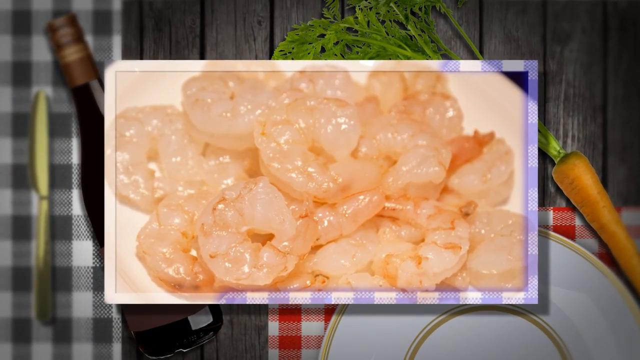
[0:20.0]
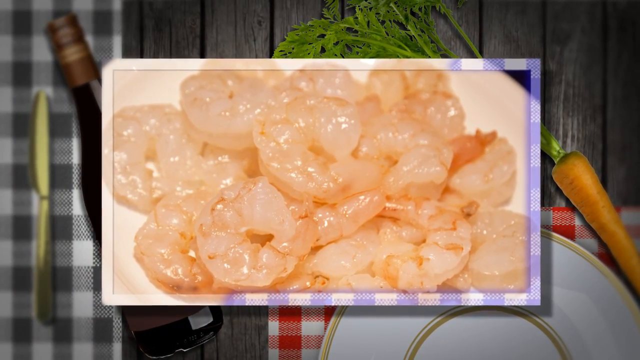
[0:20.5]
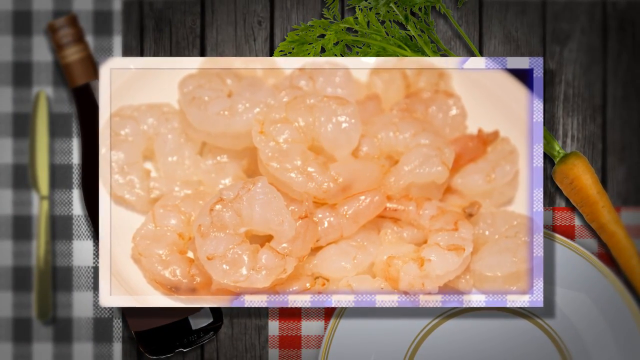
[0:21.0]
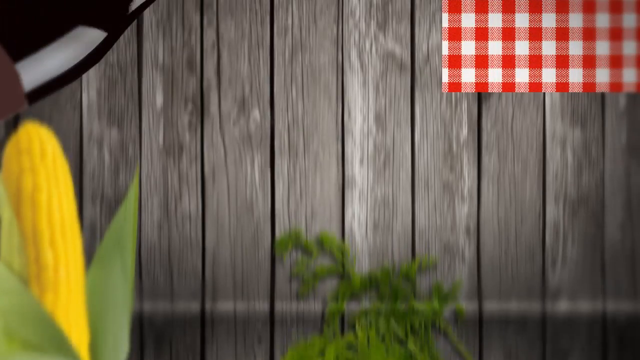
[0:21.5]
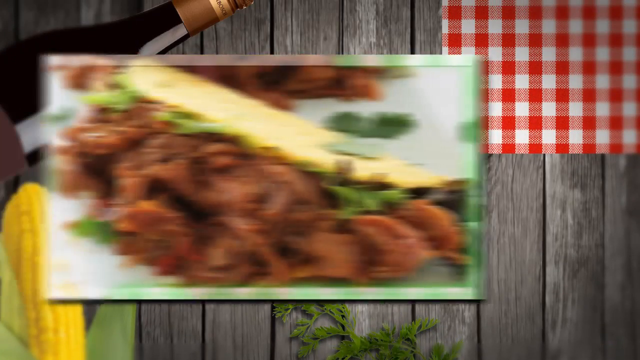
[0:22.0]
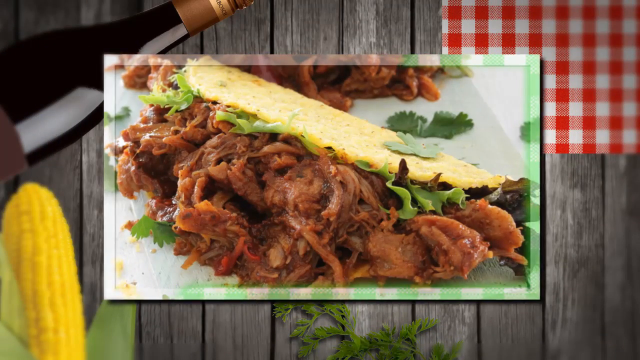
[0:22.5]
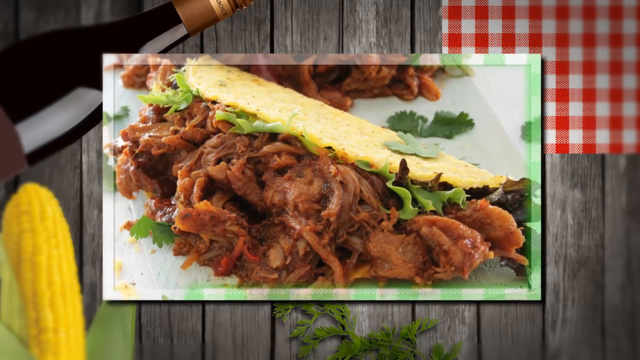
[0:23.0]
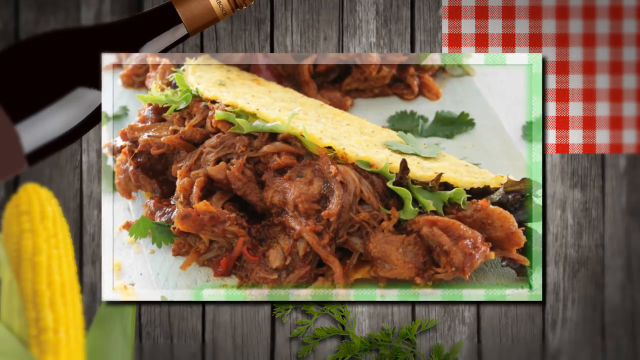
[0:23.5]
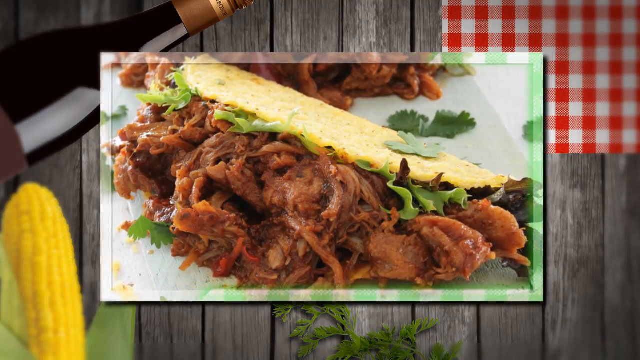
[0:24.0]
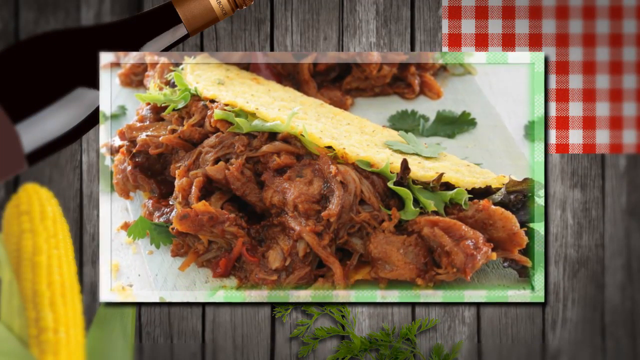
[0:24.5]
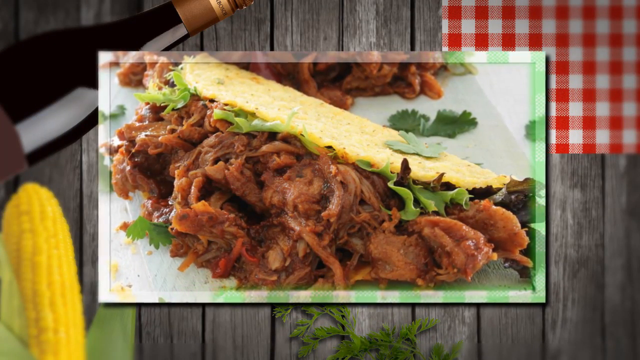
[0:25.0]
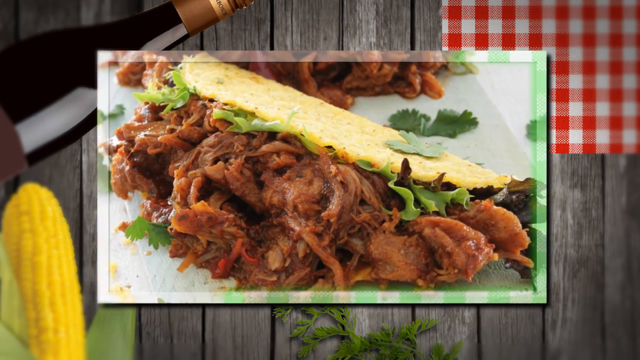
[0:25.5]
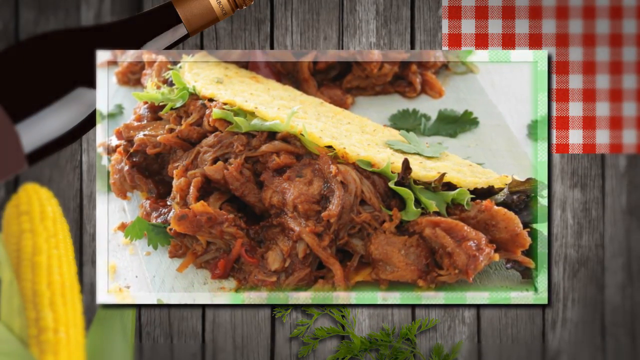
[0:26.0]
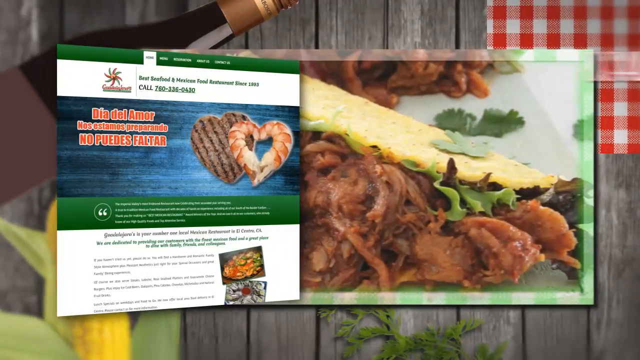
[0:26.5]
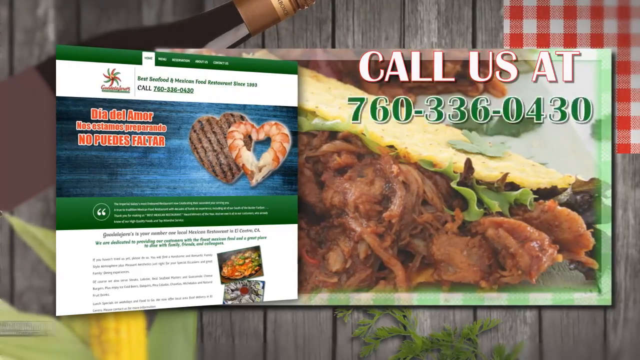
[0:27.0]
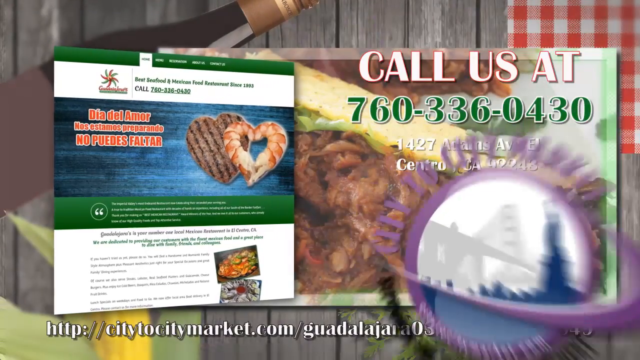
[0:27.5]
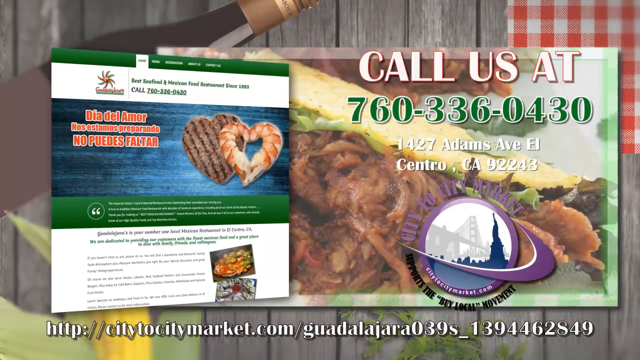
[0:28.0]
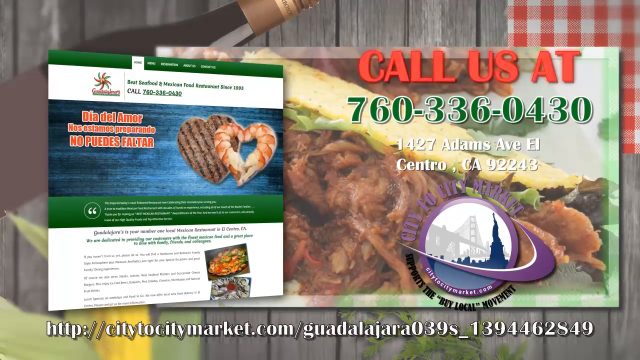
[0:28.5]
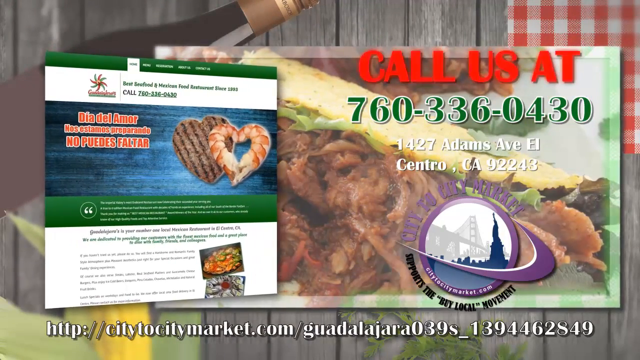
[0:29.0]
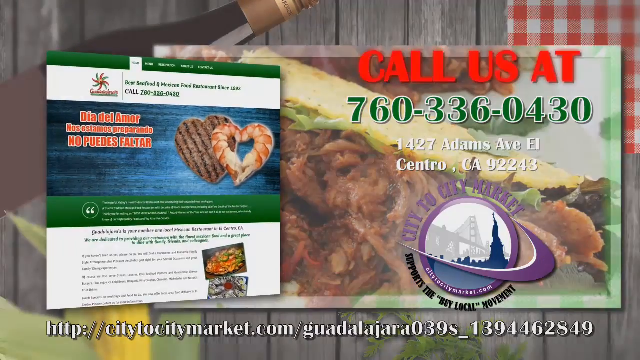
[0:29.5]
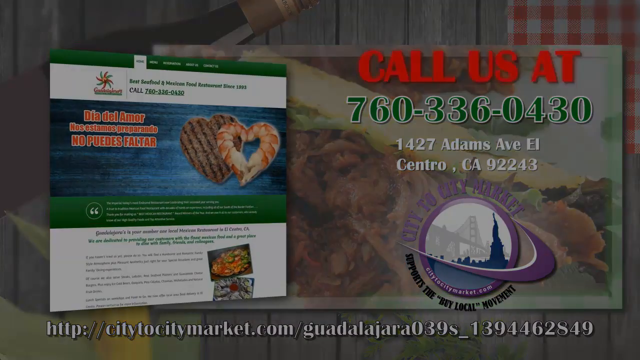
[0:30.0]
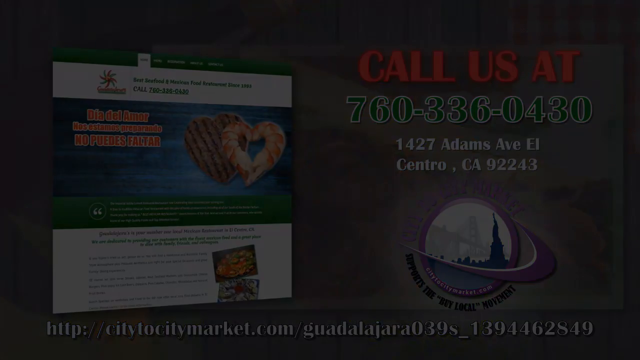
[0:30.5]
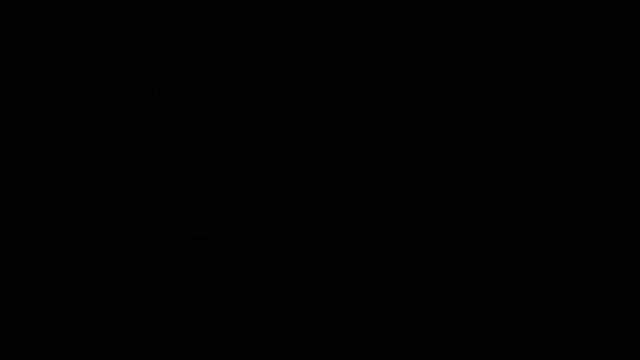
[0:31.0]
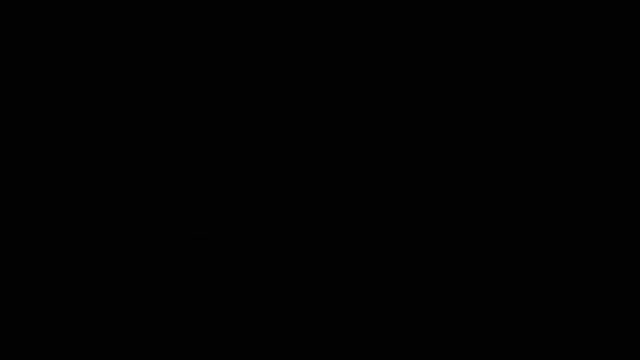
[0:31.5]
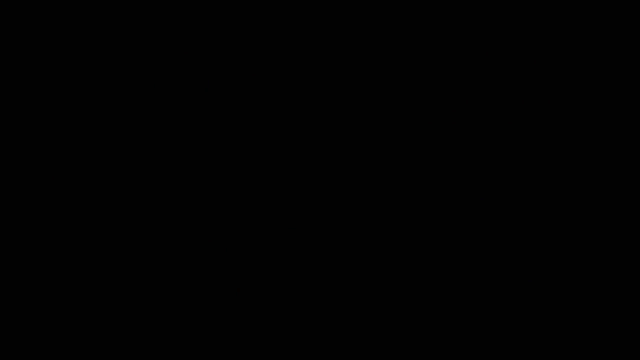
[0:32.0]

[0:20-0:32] Tacos appear next; these images are photos of the food. The taco looks like it holds maybe pulled pork or something similar, with some leaves or greens on it. A screenshot of a website then pops up on the left, along with a big "call us at 760-336-0430", an address in California, and a website listed at the bottom. There is also a purple logo that is quite hard to read; it apparently says "city to city market supported by local movement". The website shows two heart shapes: one made out of a steak and the other made of two shrimps positioned together like a heart, possibly for Valentine's Day. Spanish text reads "Dia de Amor". The ad seemingly encourages viewers to call and make a booking.